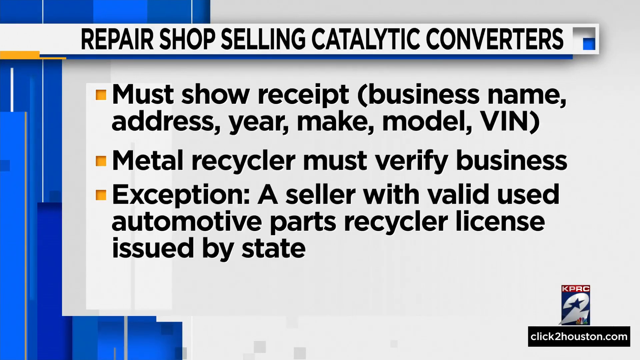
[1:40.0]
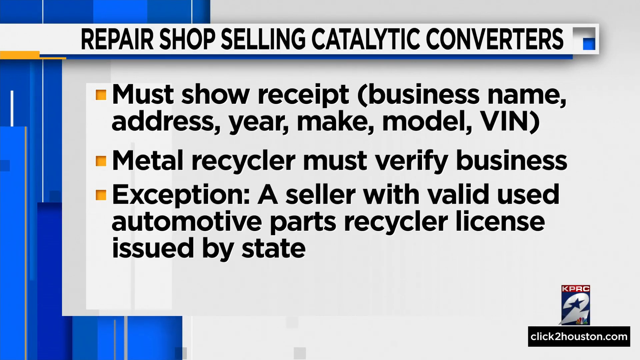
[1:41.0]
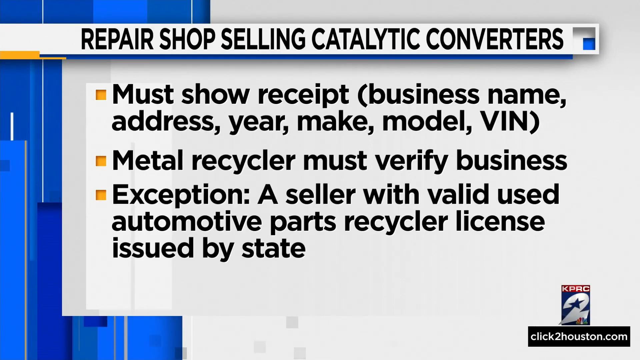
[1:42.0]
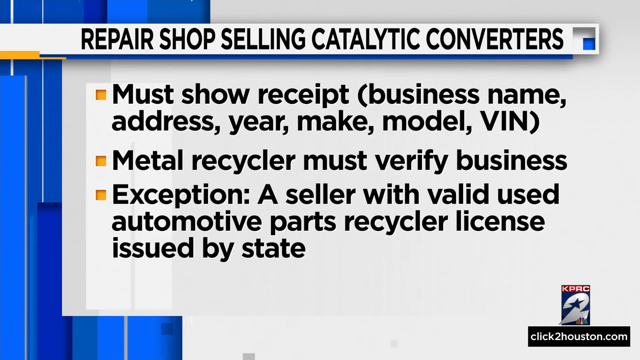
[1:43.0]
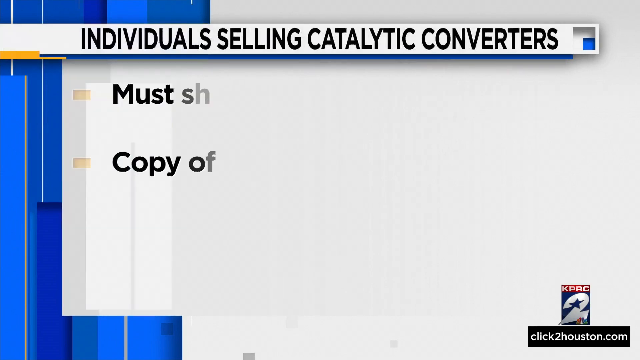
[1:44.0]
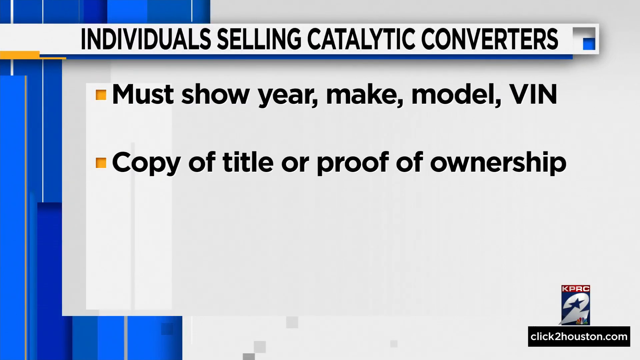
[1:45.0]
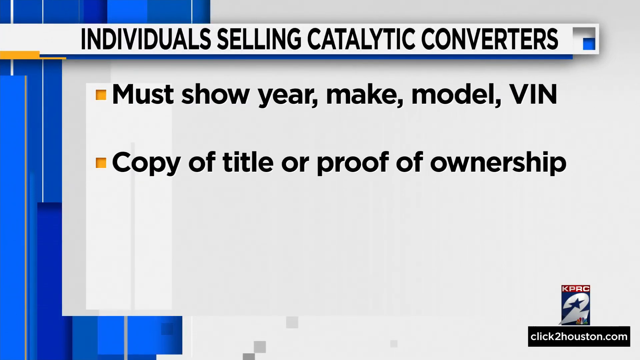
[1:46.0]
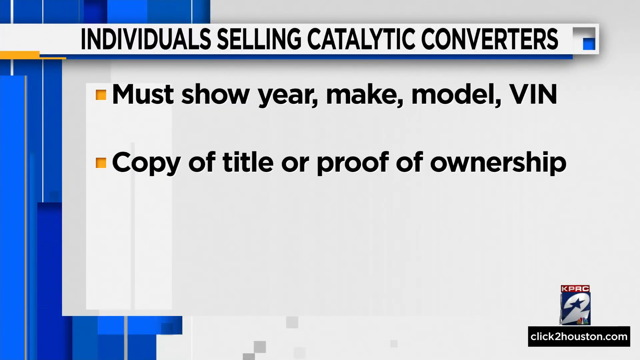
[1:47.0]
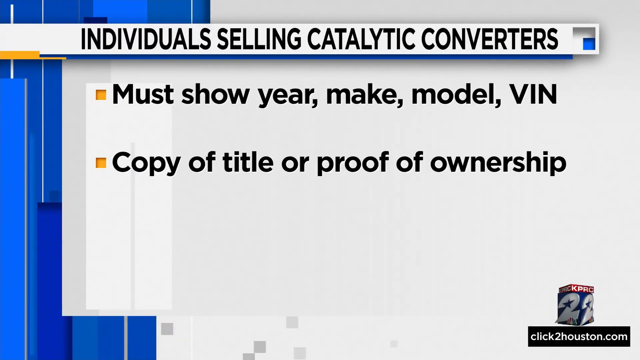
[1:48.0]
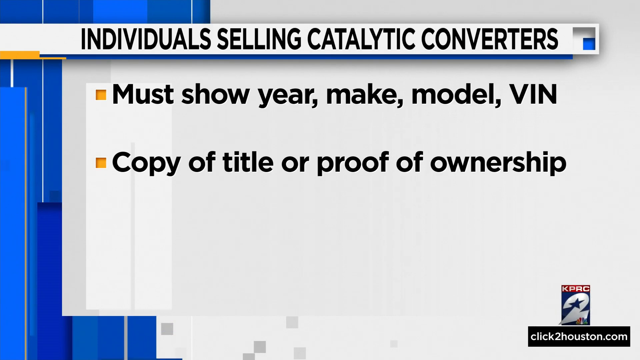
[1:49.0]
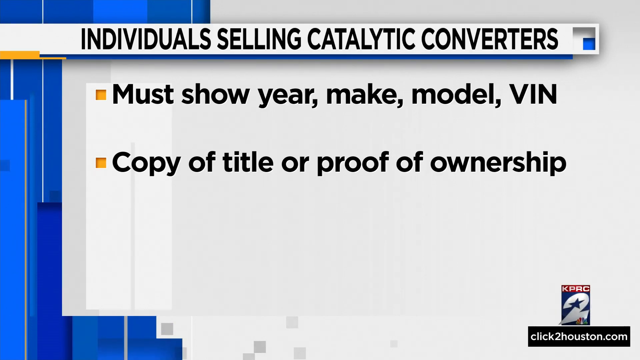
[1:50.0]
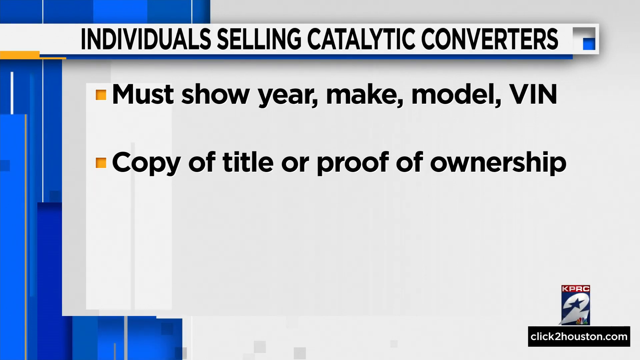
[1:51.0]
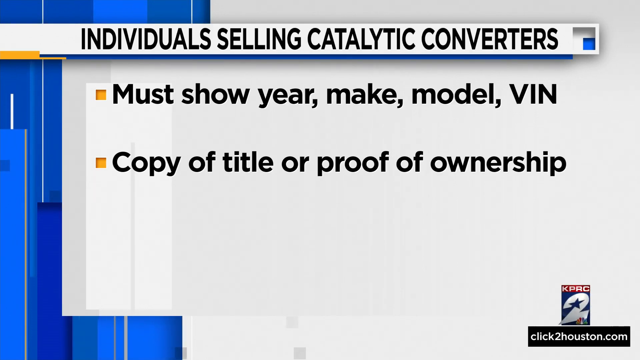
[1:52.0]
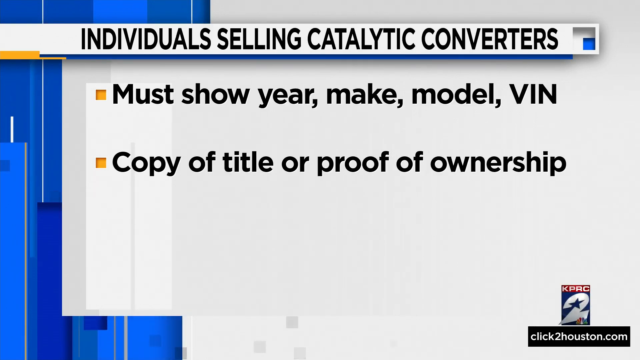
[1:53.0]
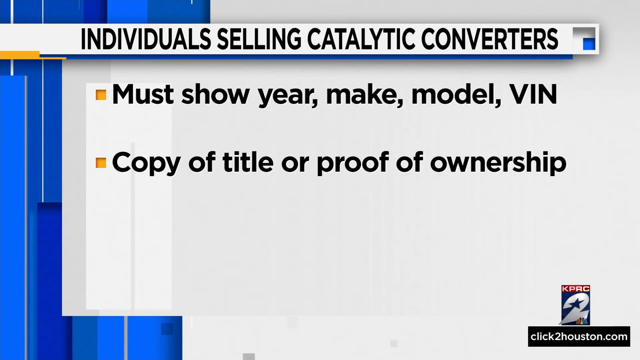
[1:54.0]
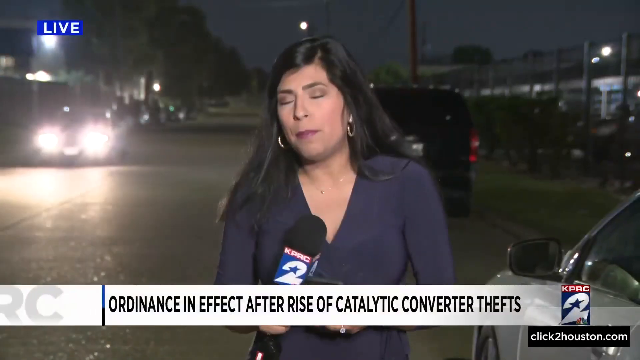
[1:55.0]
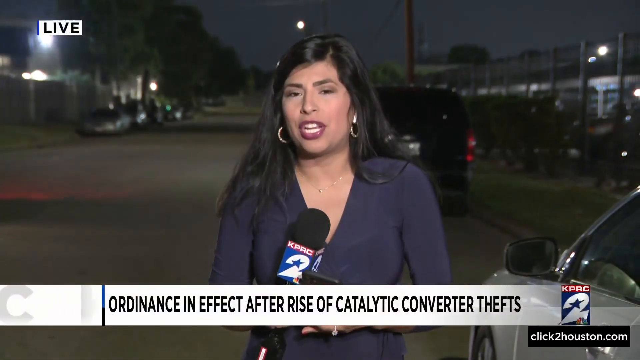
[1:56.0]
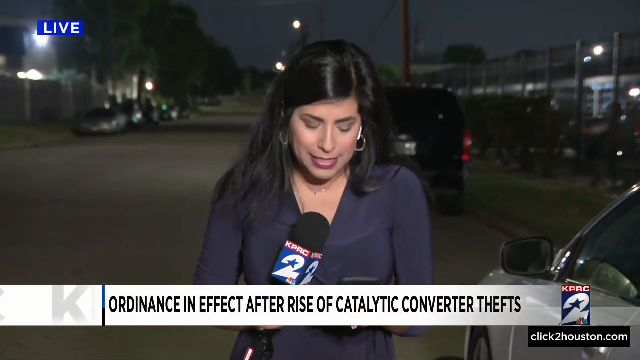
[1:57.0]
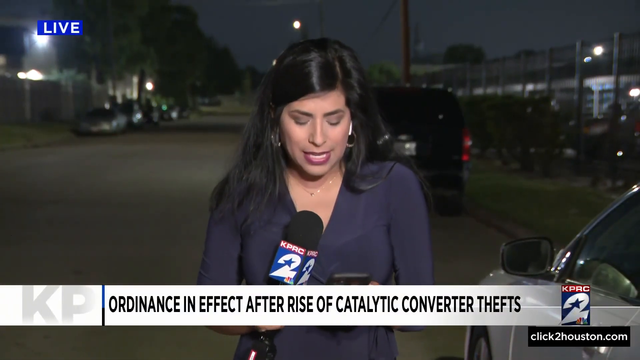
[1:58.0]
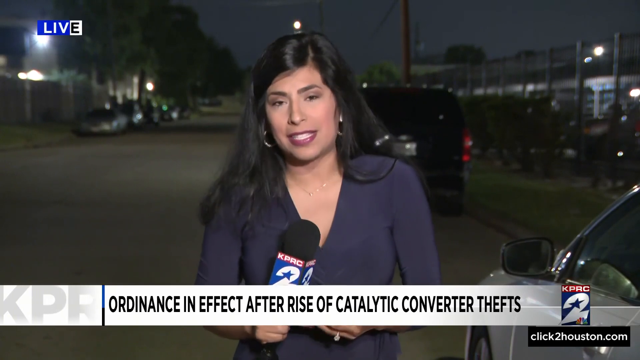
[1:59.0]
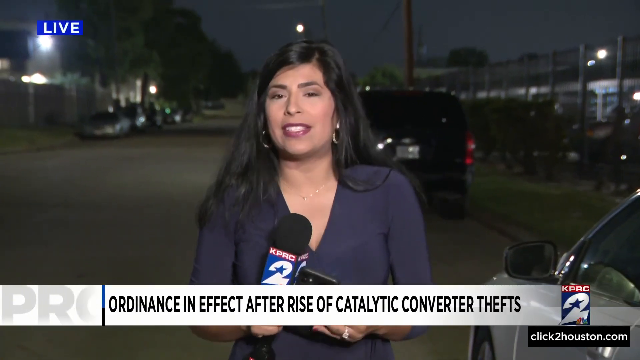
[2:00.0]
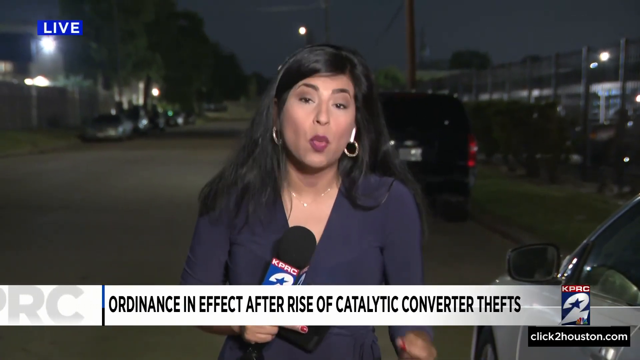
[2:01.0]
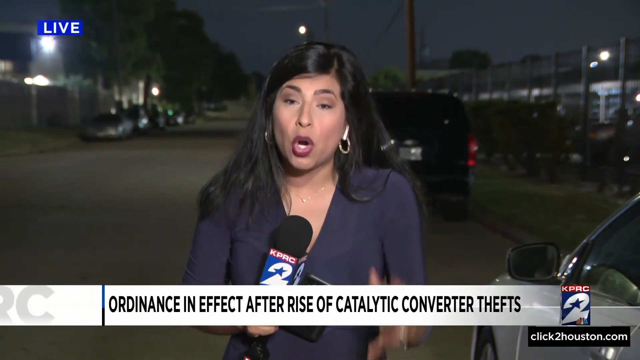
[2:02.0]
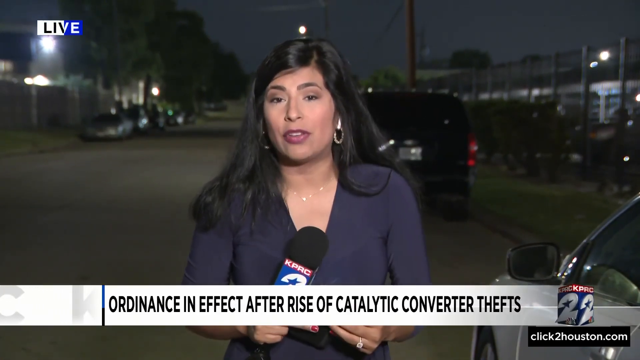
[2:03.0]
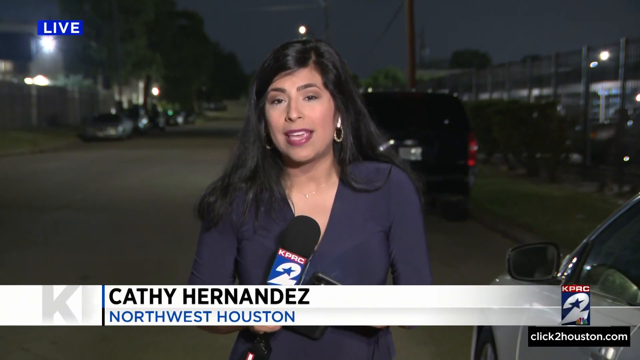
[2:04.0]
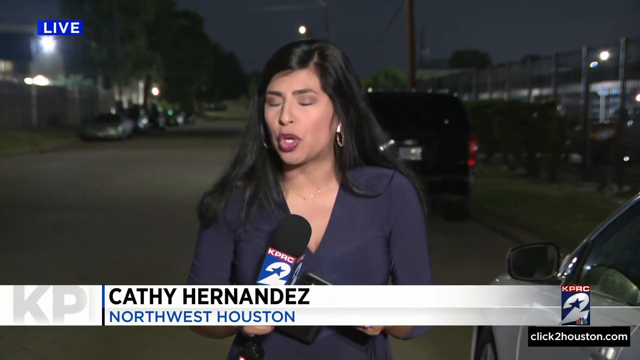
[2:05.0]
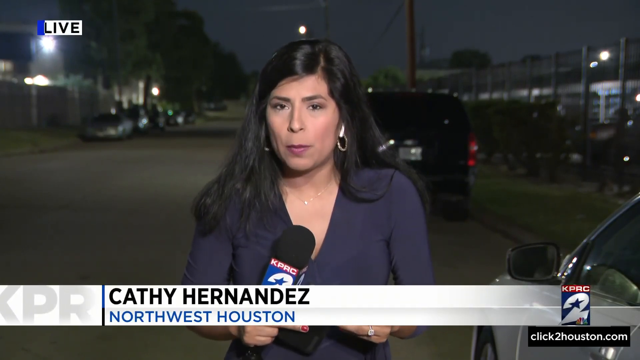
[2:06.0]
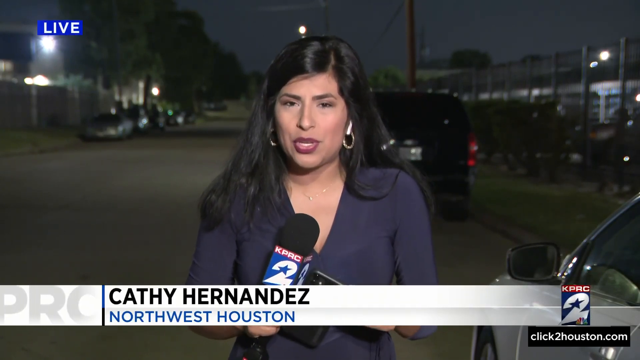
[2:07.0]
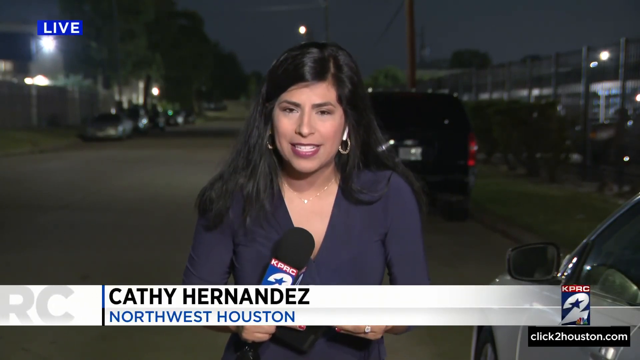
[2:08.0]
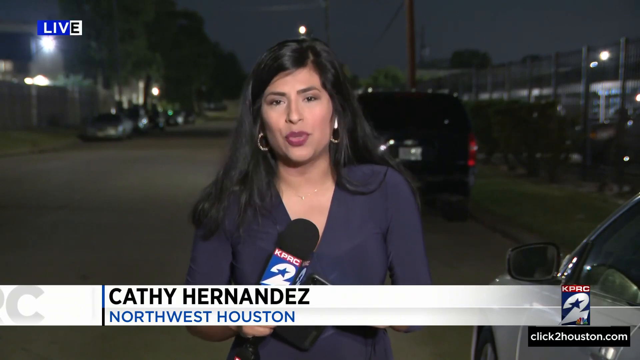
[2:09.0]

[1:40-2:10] The title "repair shop selling catalytic converters" sits at the top in its own banner, the bullet points are yellow squares, and the screen is mostly white. It transitions to another screen reading "individuals selling catalytic converters" with two bullet points: one begins "must show year make model" and the second reads "copy of title or proof of ownership". On the bottom right it says "KPRC 2 click to Houston". The video then returns to the reporter reporting live from the streets of Houston, with a white car to her right. Her name, Kathy Hernandez, appears along the bottom, along with Northwest Houston. Besides the microphone, she also holds a cell phone in her hand. It is nighttime.